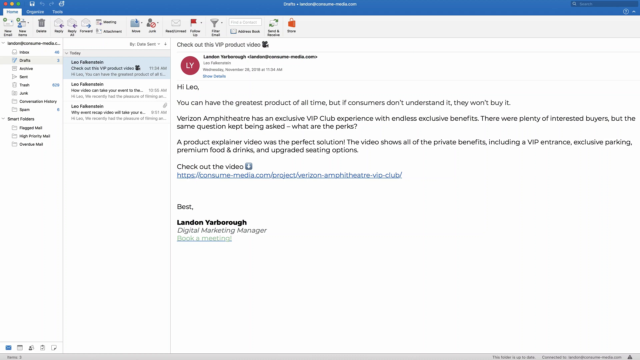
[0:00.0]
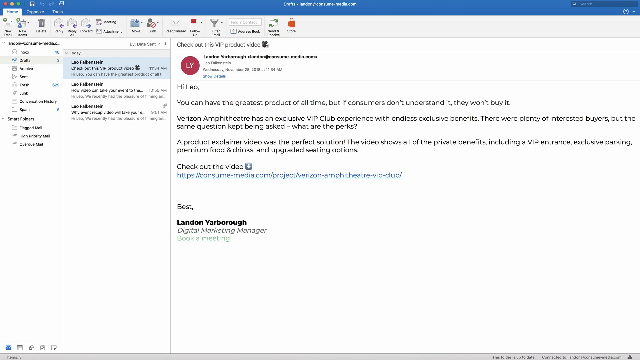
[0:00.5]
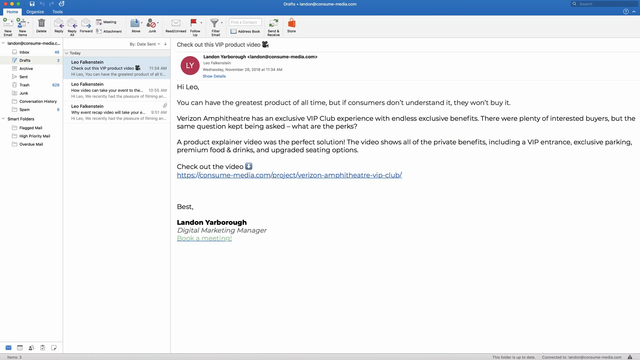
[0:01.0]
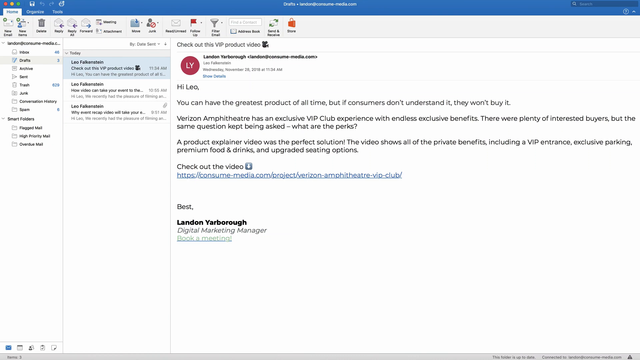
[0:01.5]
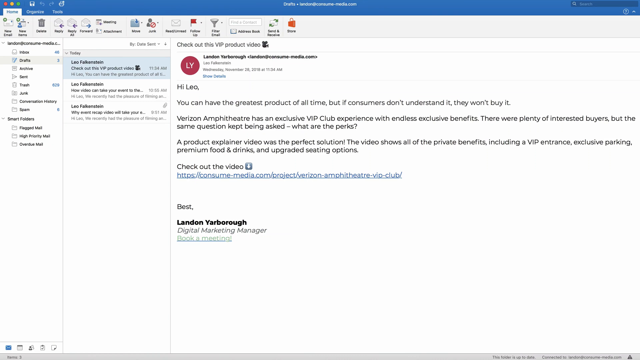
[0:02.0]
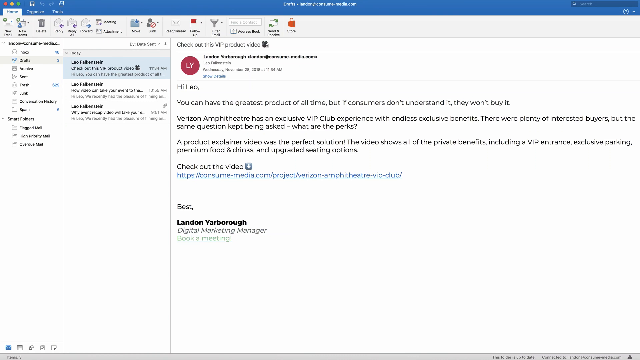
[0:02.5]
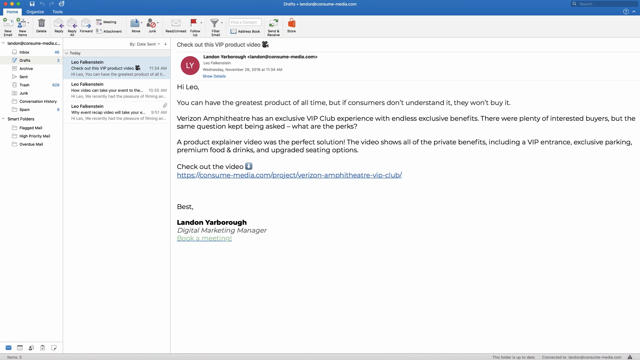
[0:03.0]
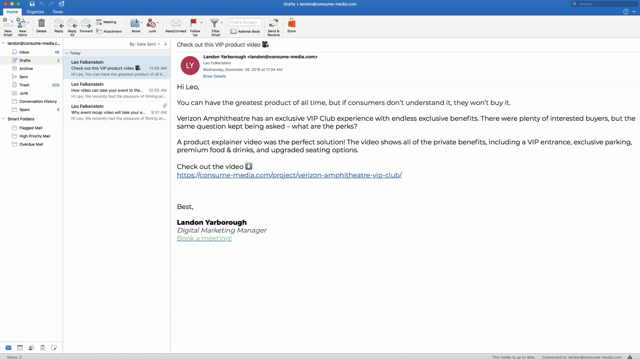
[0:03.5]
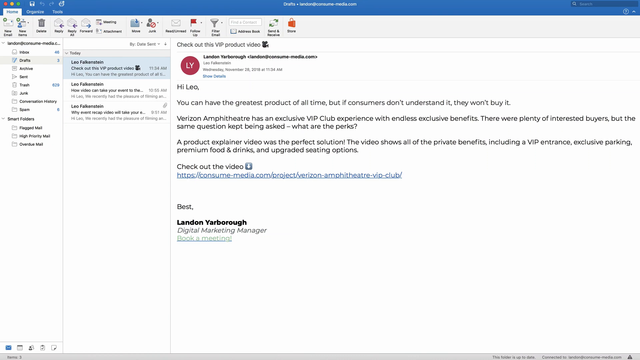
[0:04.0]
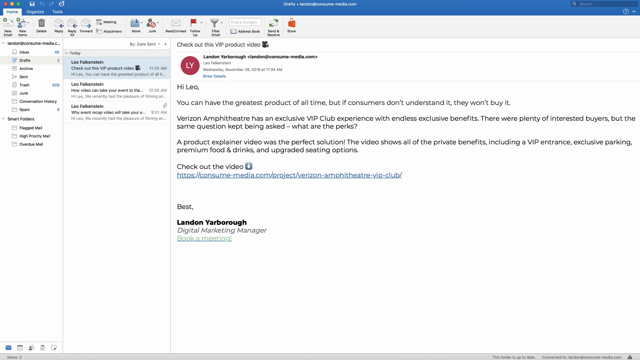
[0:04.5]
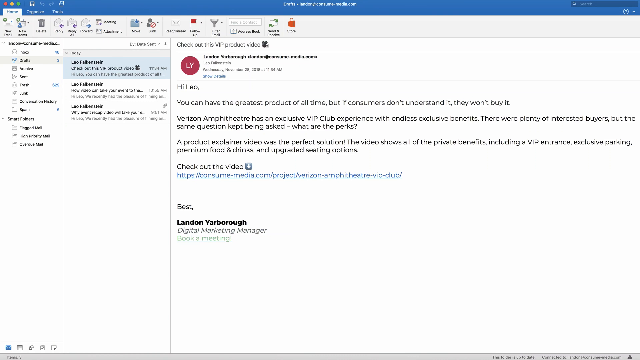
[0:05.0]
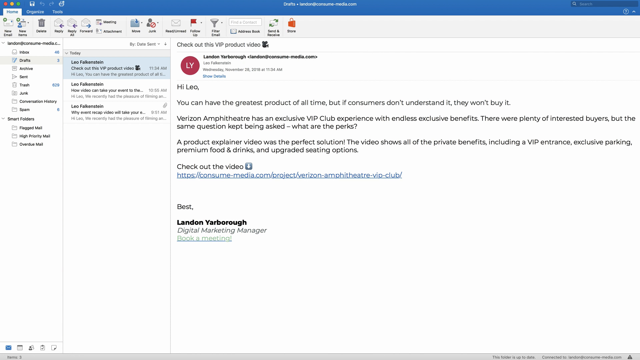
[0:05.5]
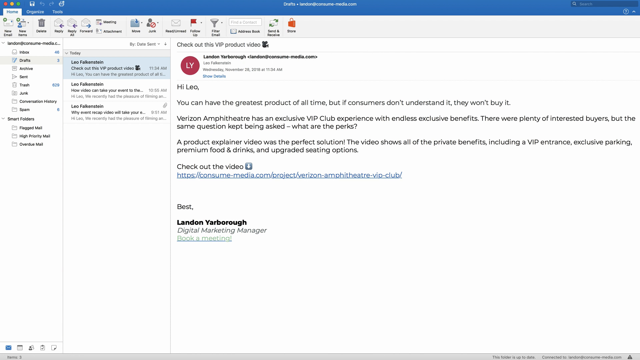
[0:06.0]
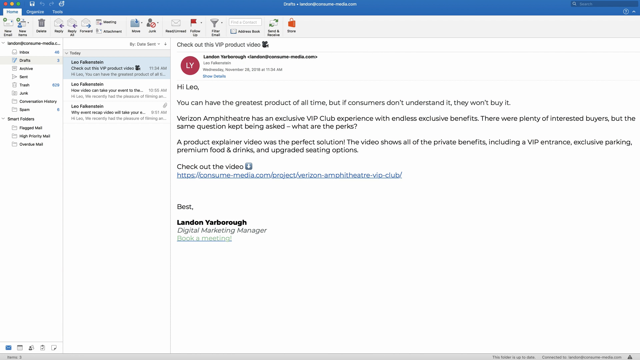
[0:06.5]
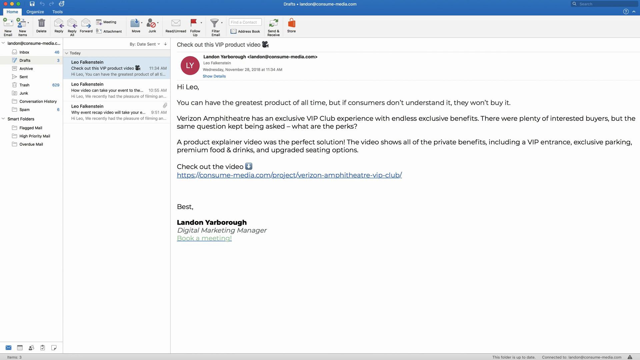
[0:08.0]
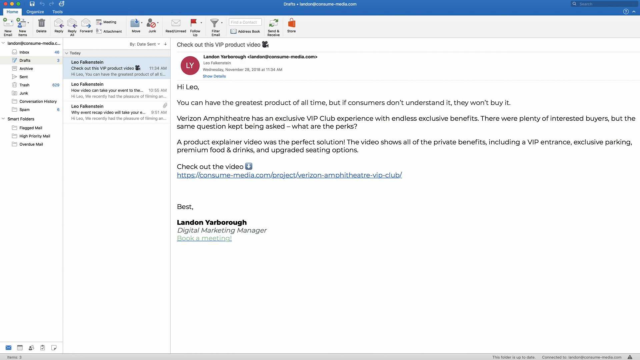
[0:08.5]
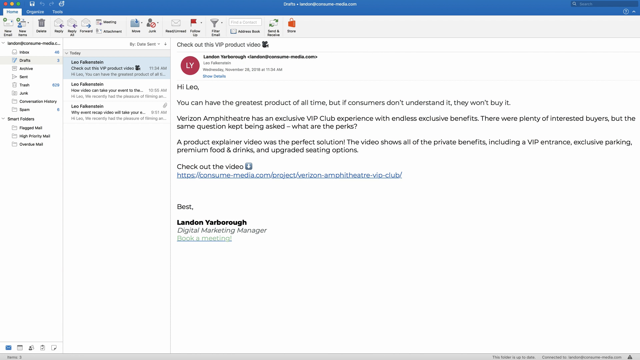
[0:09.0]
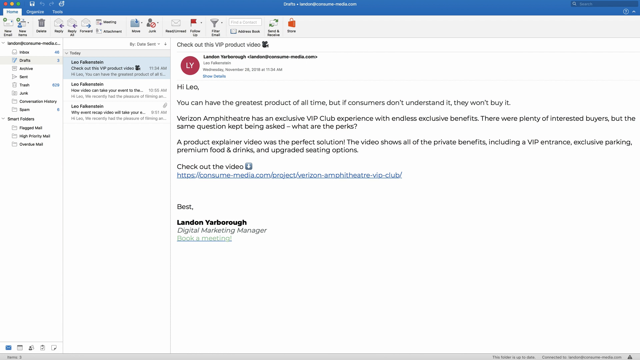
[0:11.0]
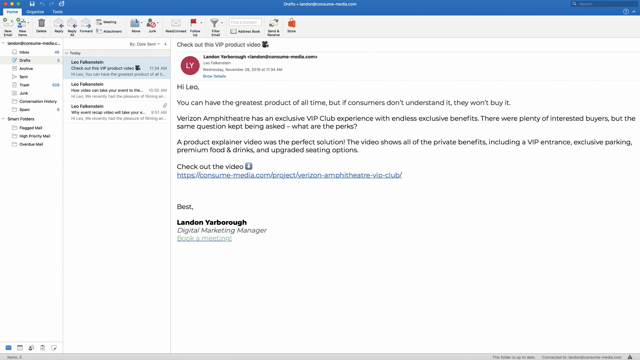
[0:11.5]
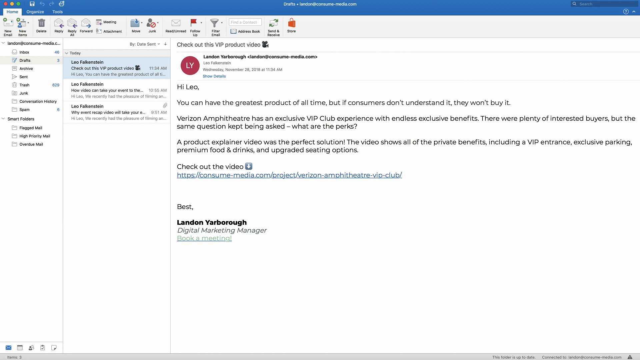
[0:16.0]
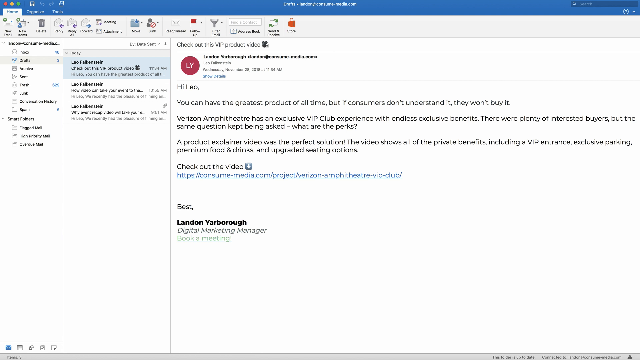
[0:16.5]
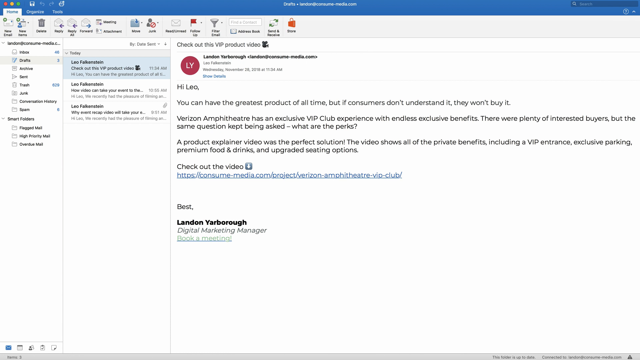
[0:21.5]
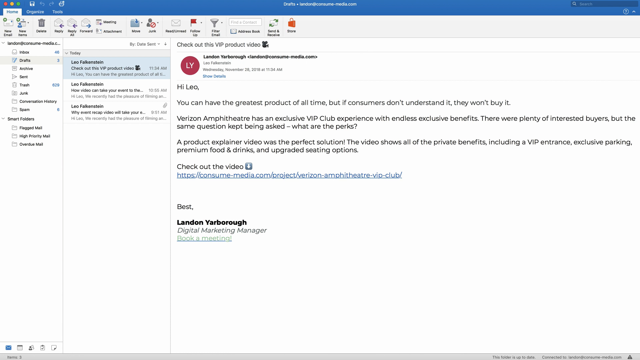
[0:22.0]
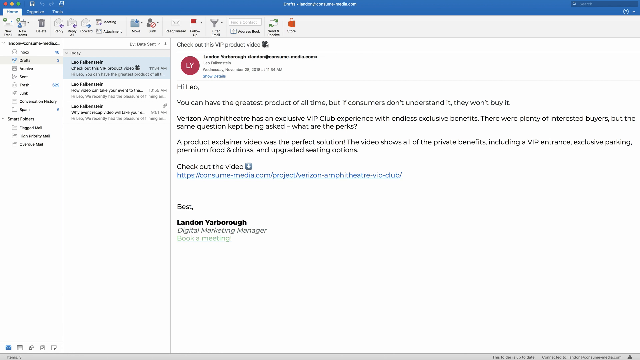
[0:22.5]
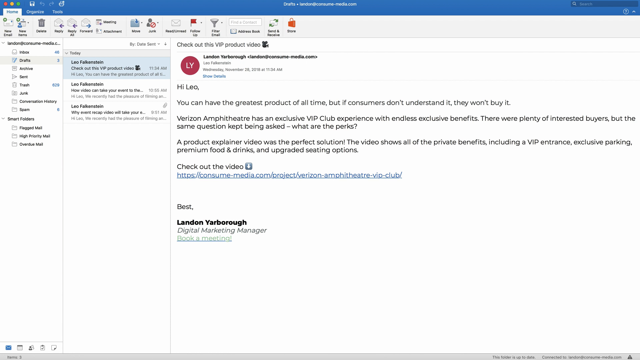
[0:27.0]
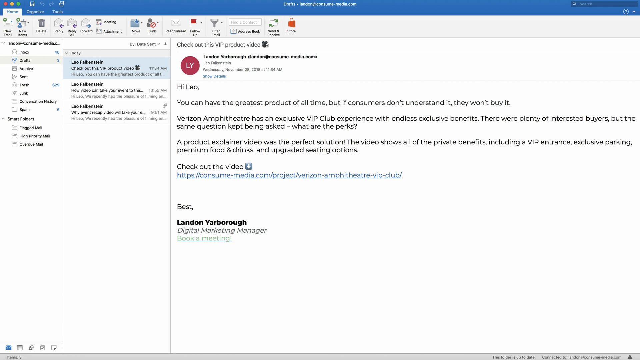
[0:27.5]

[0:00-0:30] An email from Landon Yarborough, digital marketing manager of Verizon Amphitheatre, addressed to Leo, is on the screen. It reads: "Hi Leo, you can have the greatest product of all time, but if consumers don't understand it, they won't buy it. Verizon Amphitheatre has an exclusive VIP club experience with endless exclusive benefits. There were plenty of interested buyers, but the same question kept being asked, what are the perks? A product explainer video was the perfect solution. The video shows of all the private benefits, including a VIP entrance, exclusive parking for the members, premium food and drinks, and upgraded seating options." The email includes a link for Leo to check out the video, reading kanzunmedia.com project Verizon Amphitheater VIP Club.